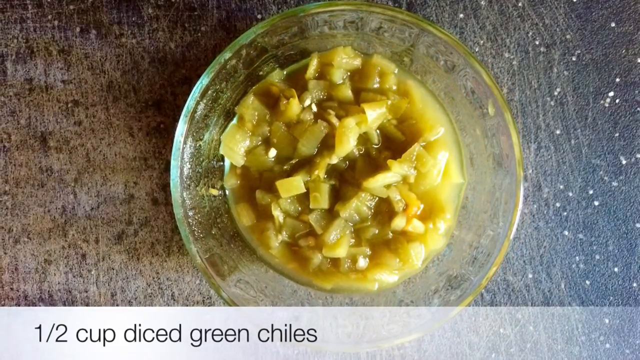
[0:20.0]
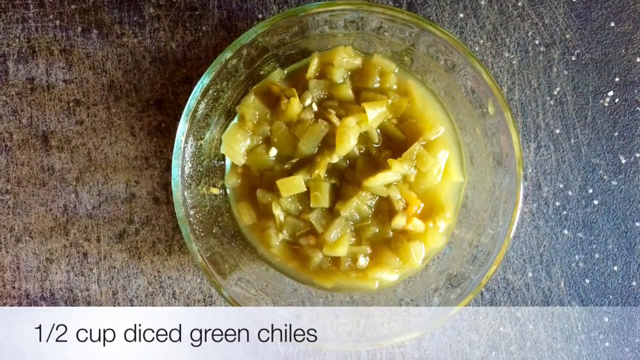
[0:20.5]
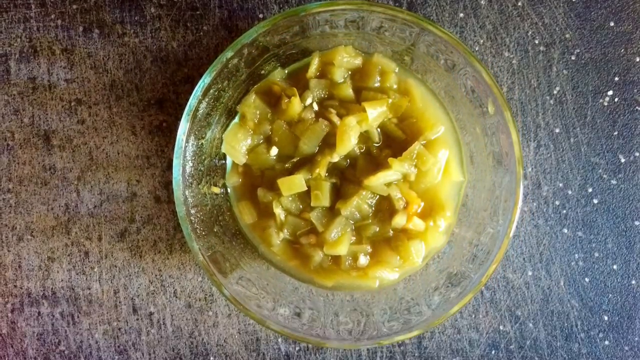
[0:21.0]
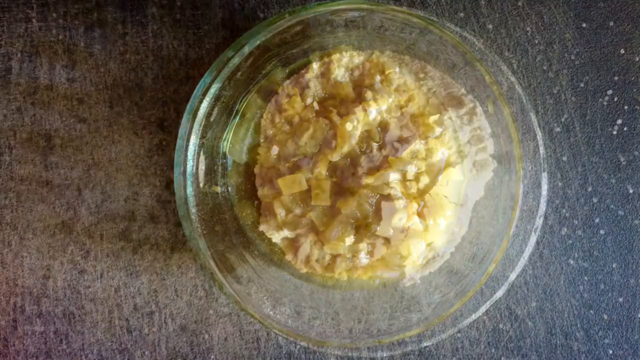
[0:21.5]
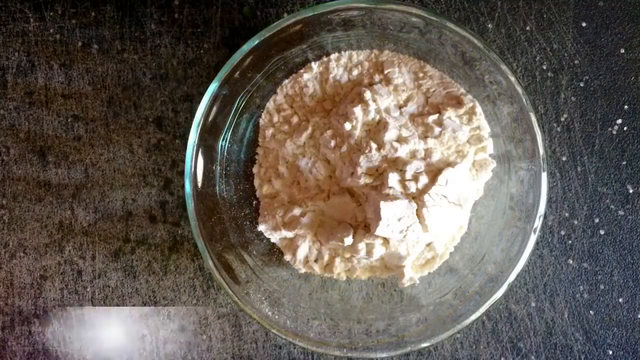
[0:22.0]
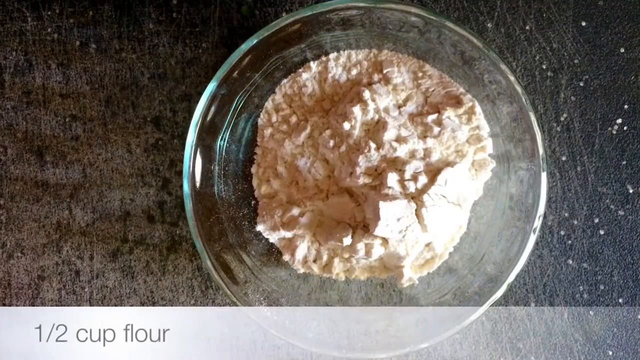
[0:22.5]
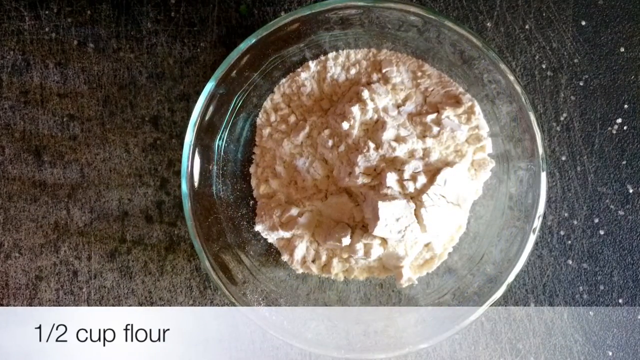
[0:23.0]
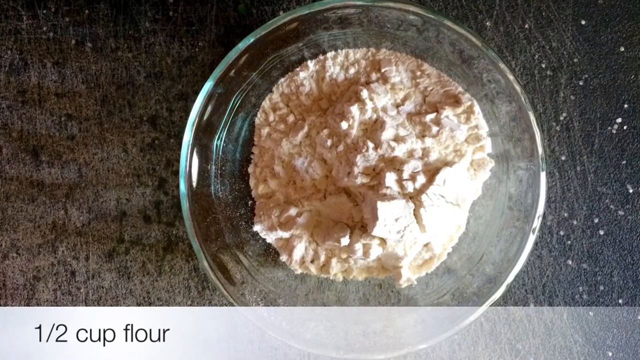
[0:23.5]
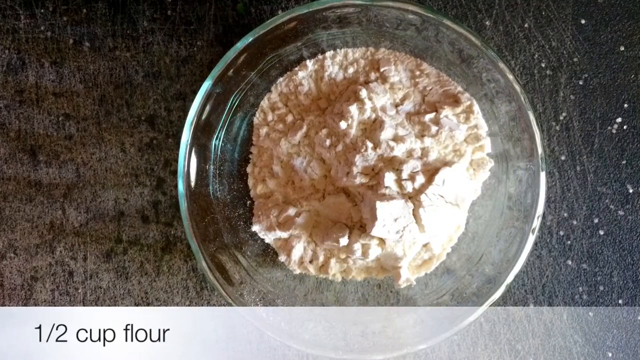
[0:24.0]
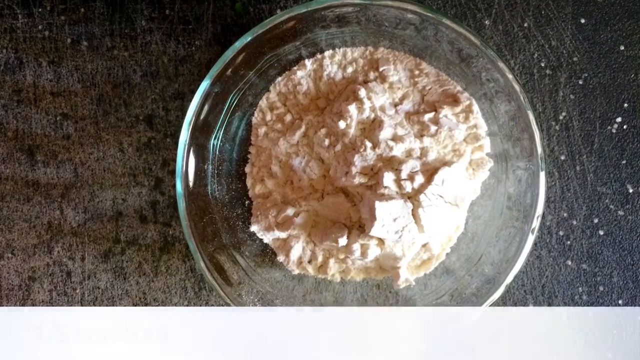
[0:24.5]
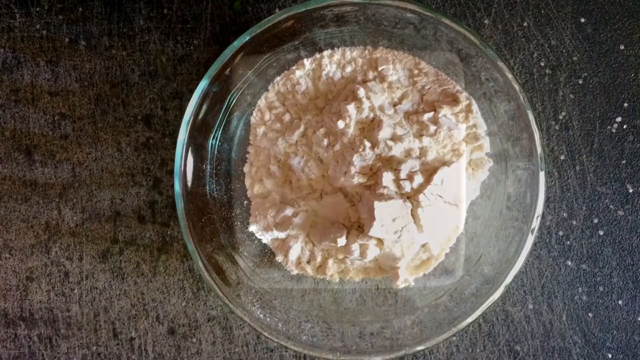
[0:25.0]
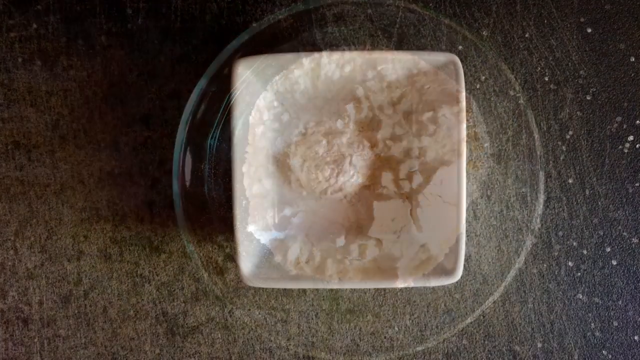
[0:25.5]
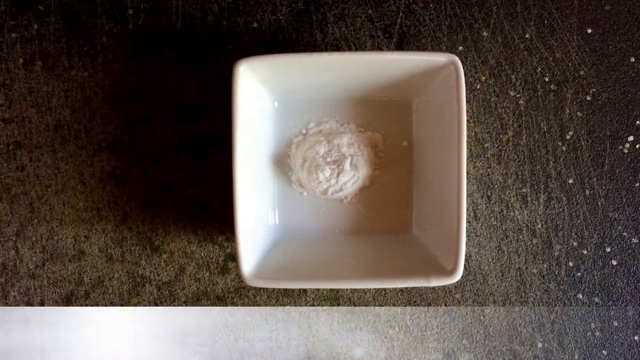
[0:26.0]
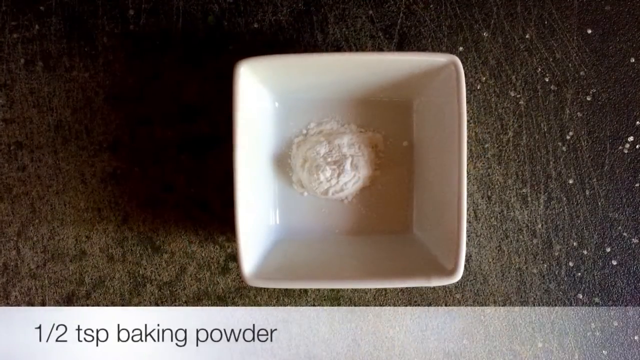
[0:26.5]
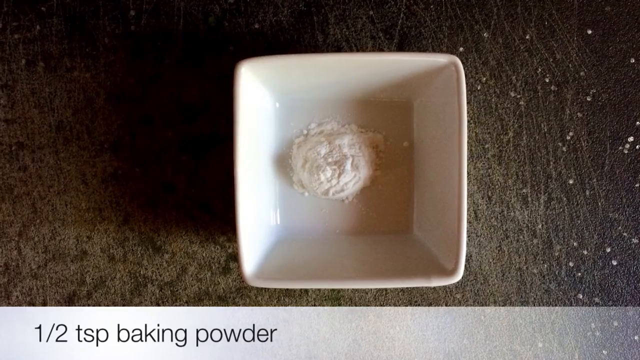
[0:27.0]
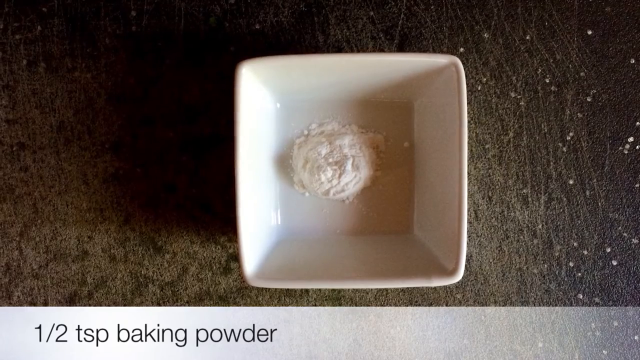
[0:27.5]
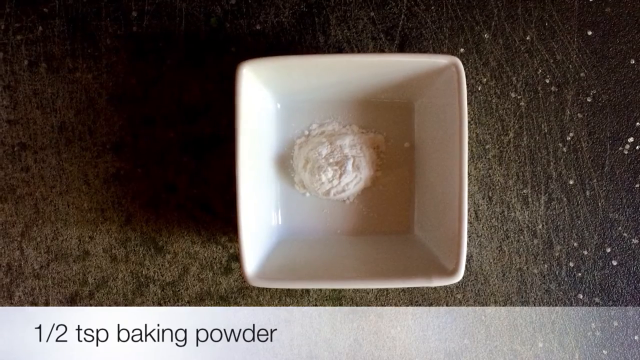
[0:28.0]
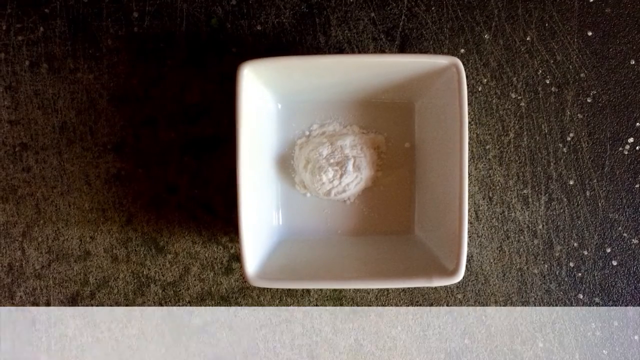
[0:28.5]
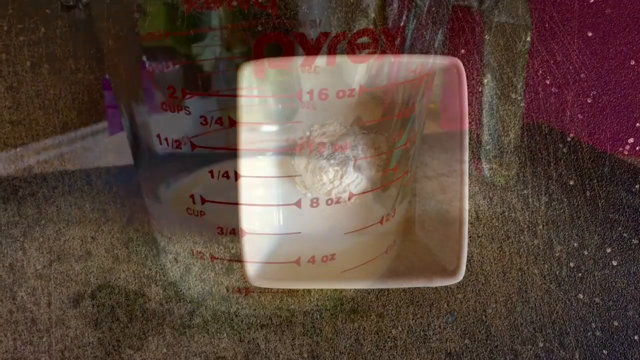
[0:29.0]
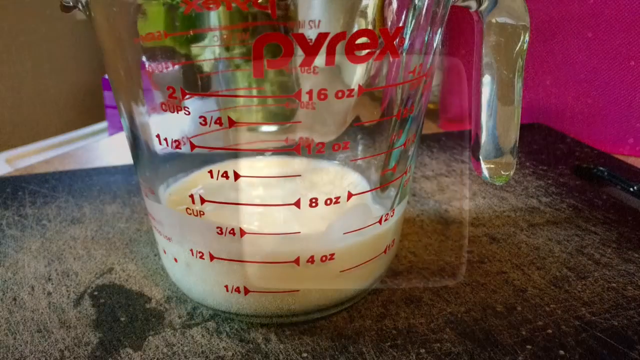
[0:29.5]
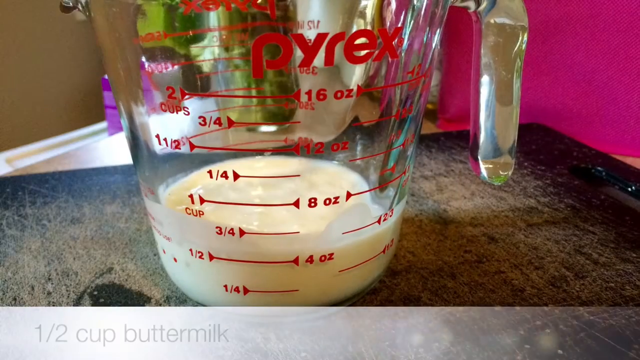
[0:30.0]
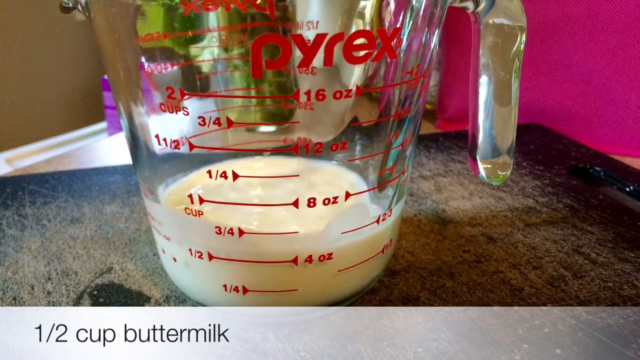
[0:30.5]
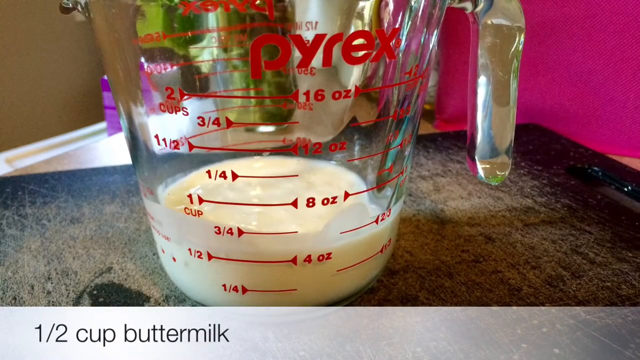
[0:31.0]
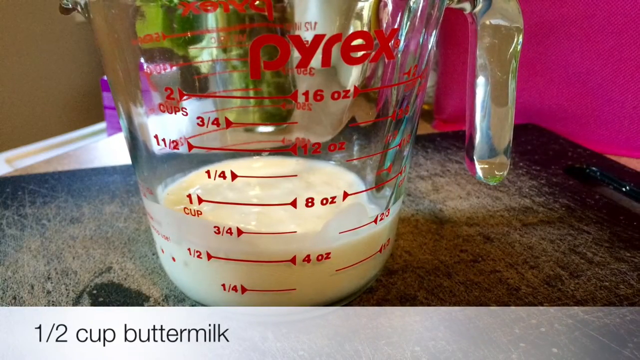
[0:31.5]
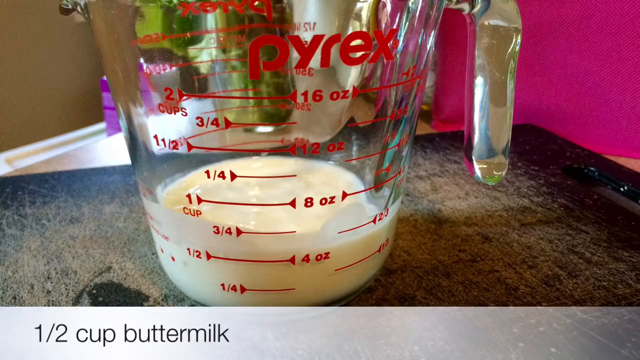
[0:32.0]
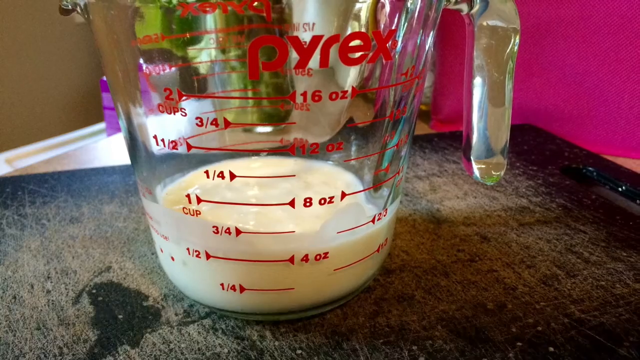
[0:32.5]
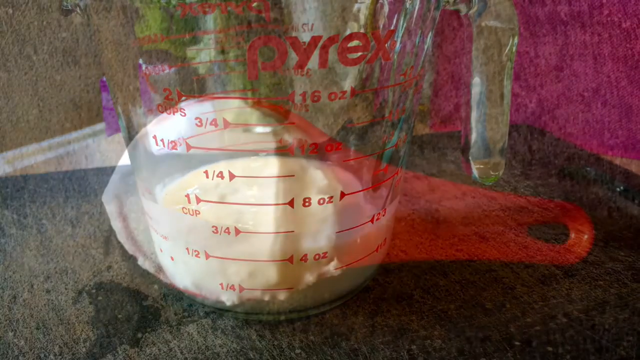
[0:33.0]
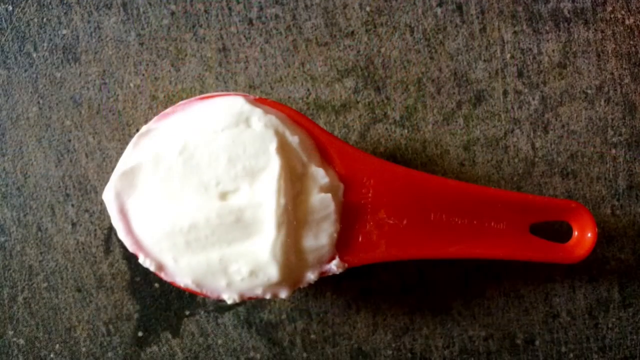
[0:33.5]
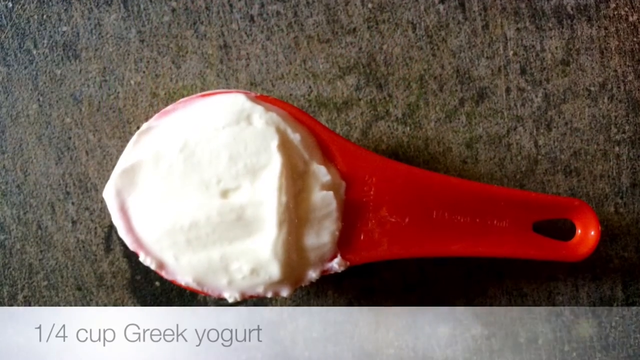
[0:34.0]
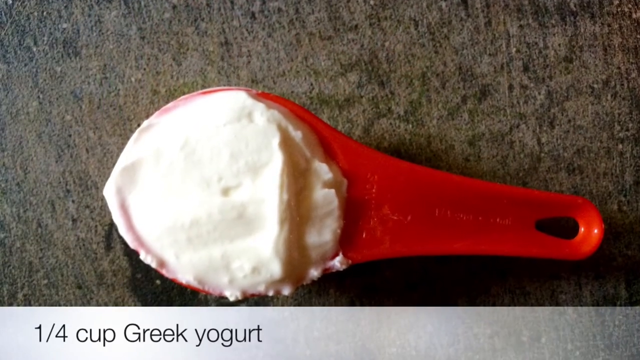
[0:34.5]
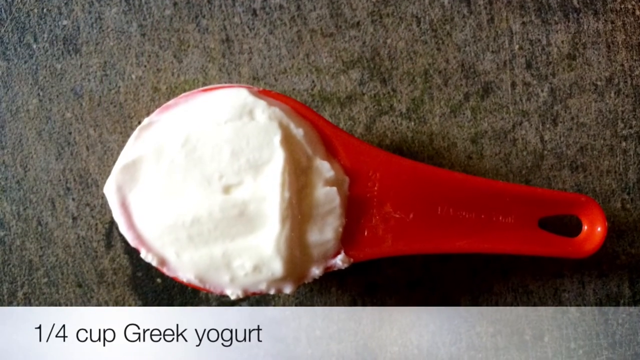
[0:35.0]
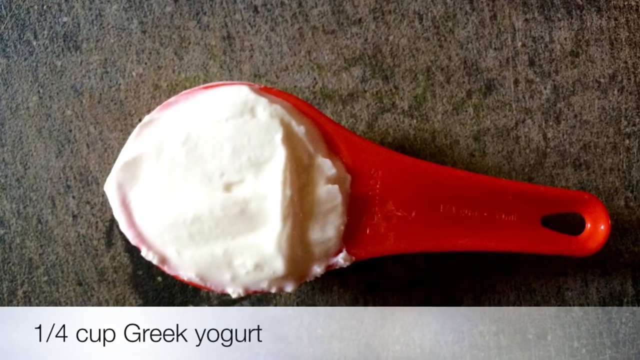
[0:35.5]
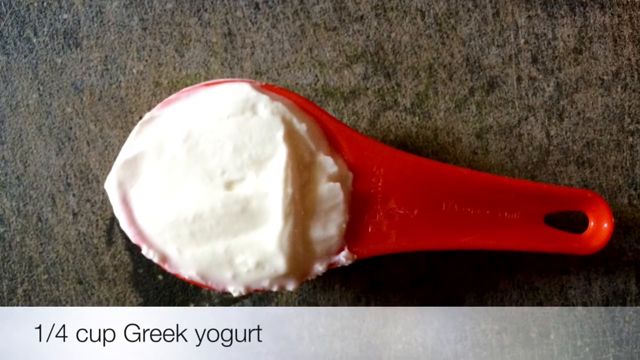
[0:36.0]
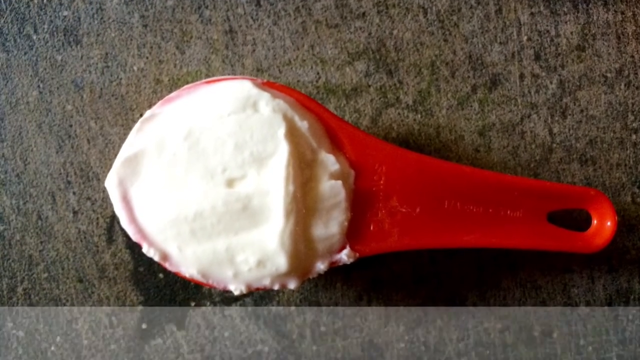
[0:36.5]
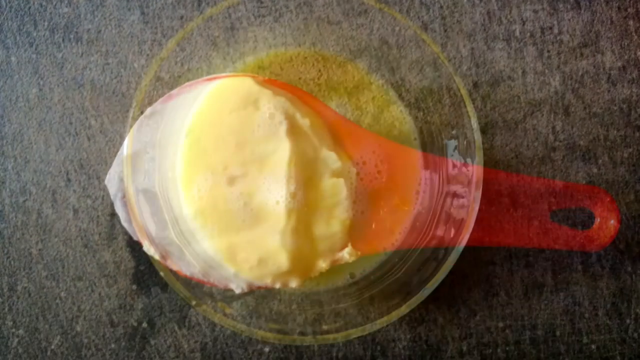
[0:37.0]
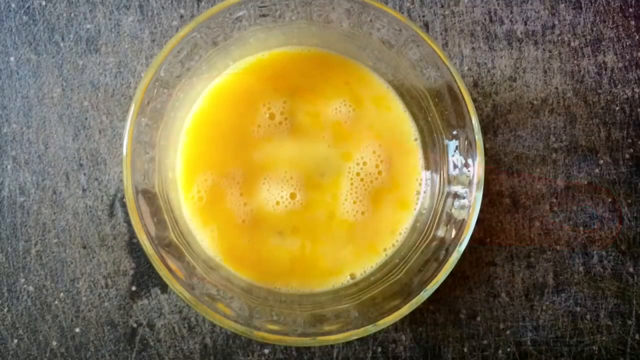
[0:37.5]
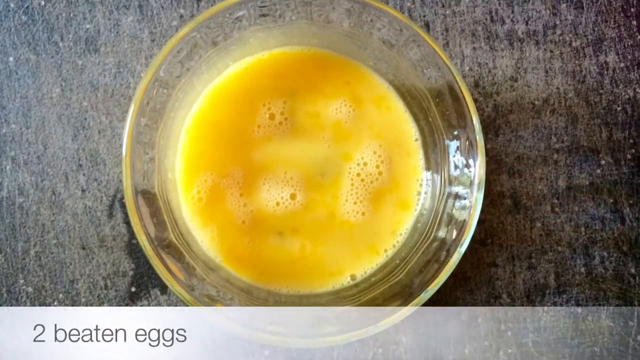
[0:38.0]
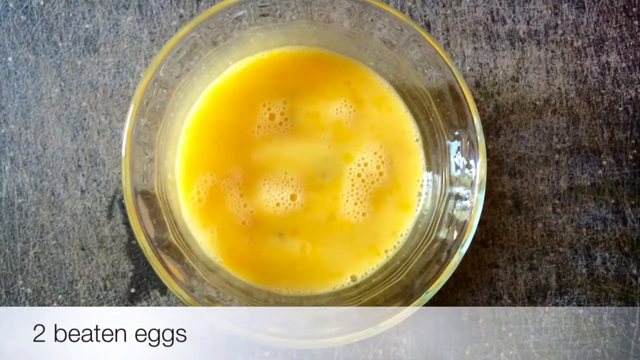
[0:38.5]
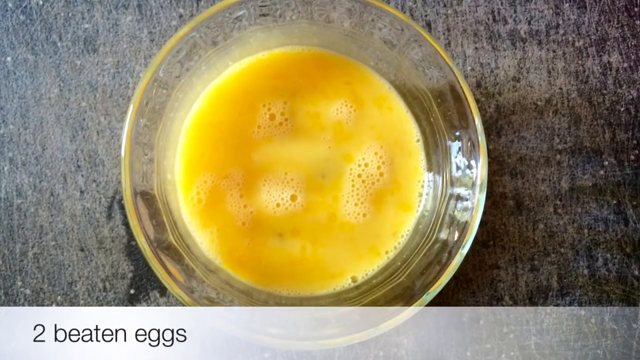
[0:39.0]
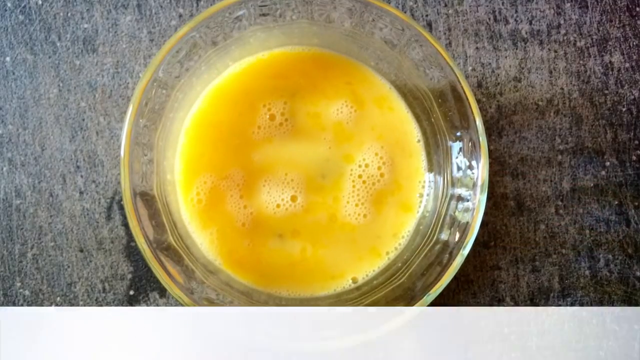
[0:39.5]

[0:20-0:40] The ingredients are shown in bowls: what could be some peppers, some flour, and a square white bowl holding a white circle of an unidentified white powdery substance. Milk fills a two-cup glass Pyrex measuring cup with a glass handle to about three quarters full. The setting appears to be a kitchen counter; behind it a little of the floor and the trim are visible, and there appears to be a brown wall and then a pink wall. Another measuring cup is filled with a quarter cup of Greek yogurt, and there is some egg in a glass bowl. These are all the ingredients needed for the mini Mexican chicken quiche, and most of them are in glass bowls.